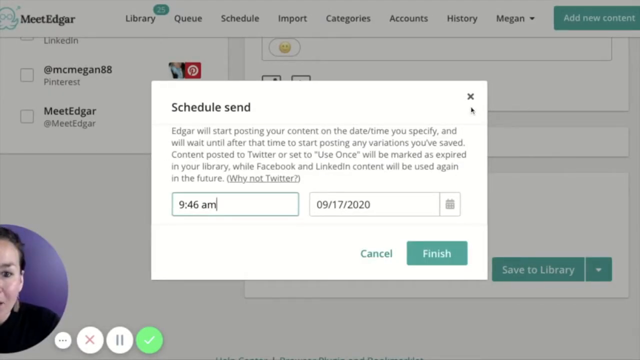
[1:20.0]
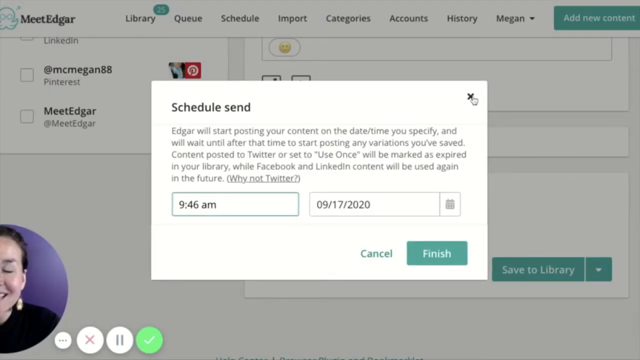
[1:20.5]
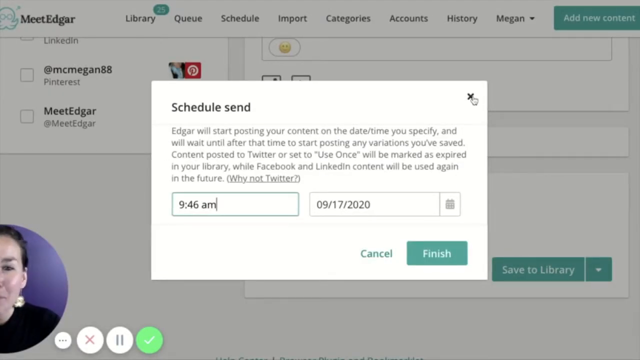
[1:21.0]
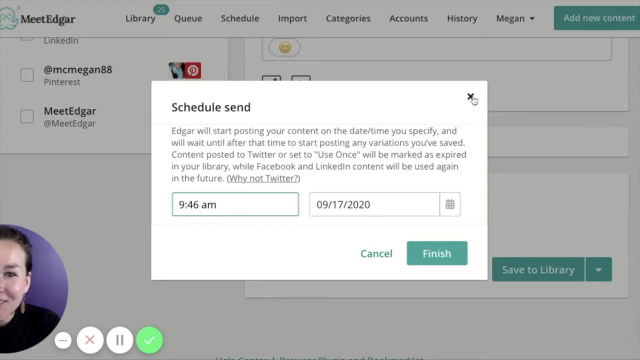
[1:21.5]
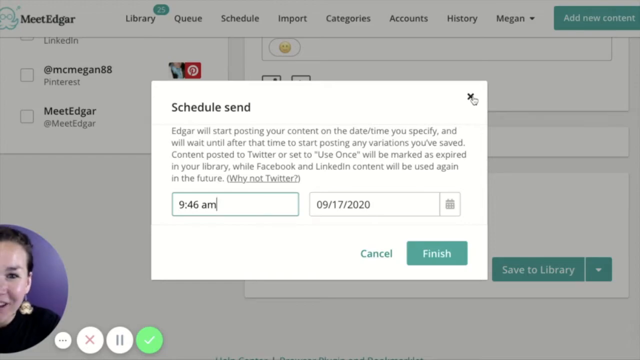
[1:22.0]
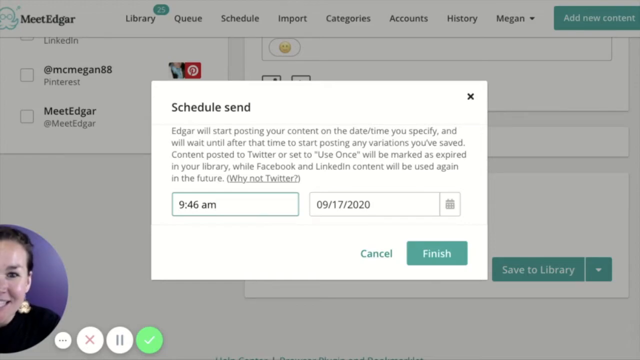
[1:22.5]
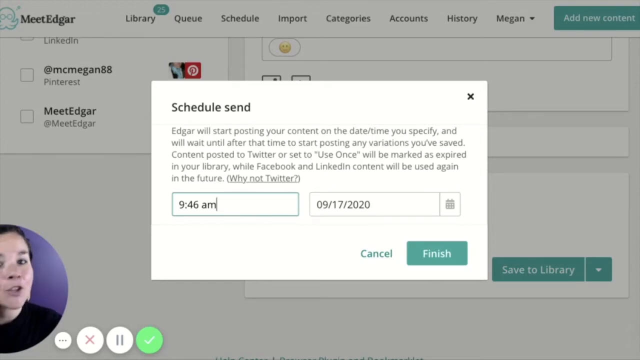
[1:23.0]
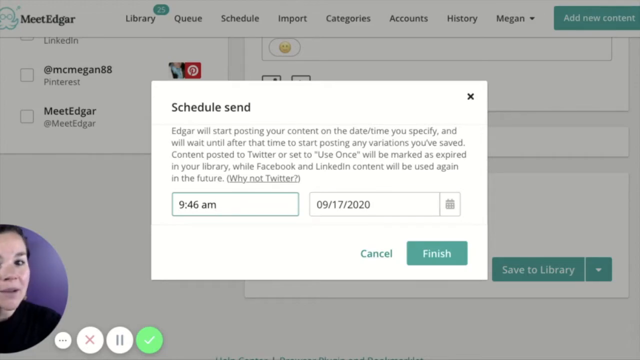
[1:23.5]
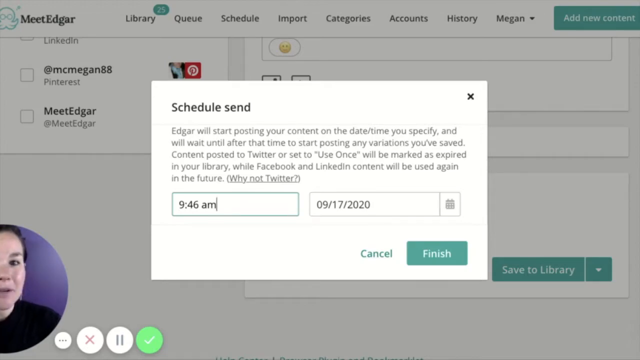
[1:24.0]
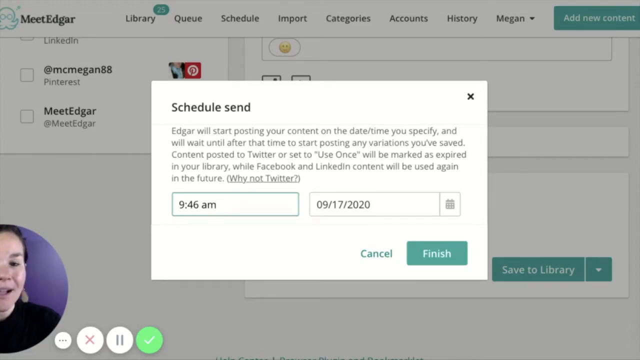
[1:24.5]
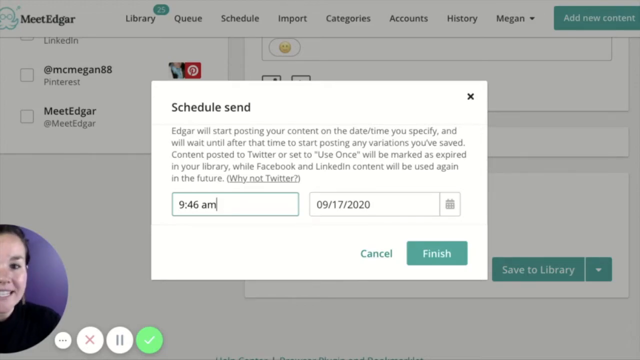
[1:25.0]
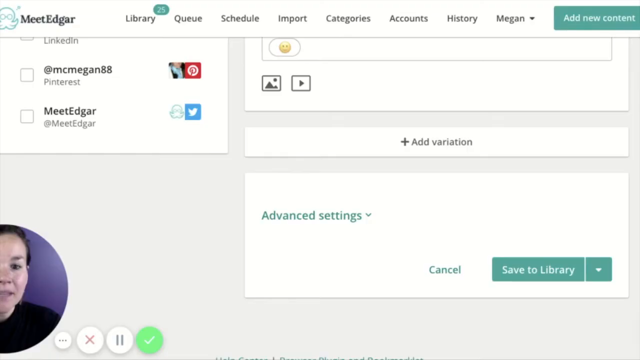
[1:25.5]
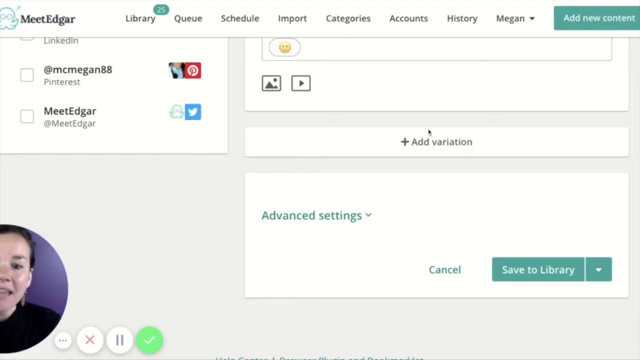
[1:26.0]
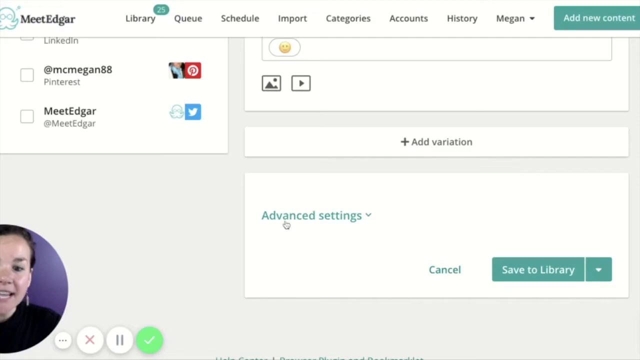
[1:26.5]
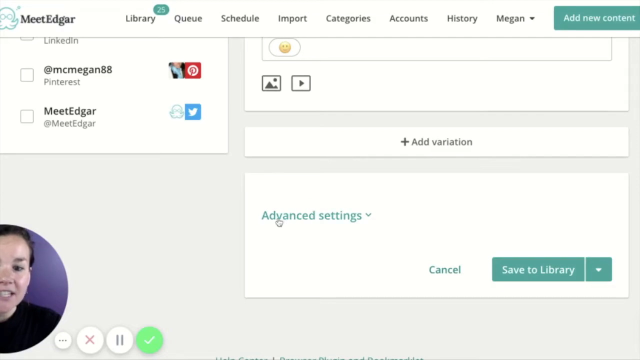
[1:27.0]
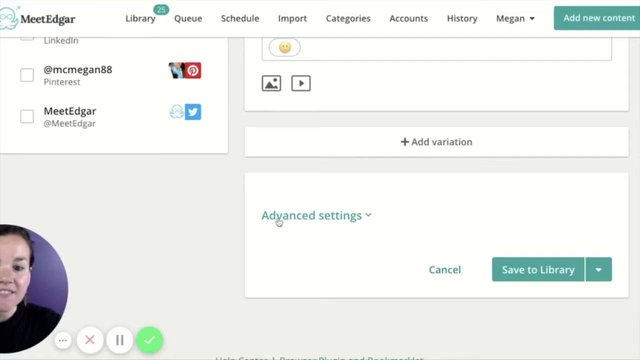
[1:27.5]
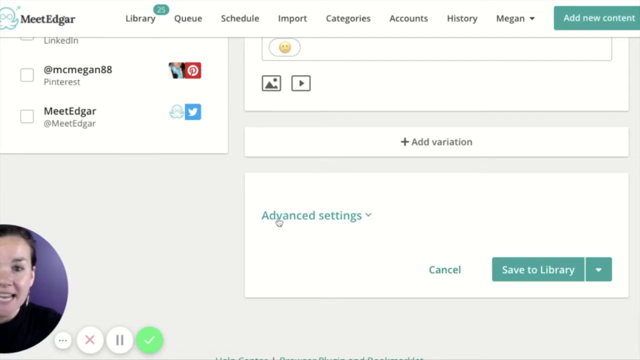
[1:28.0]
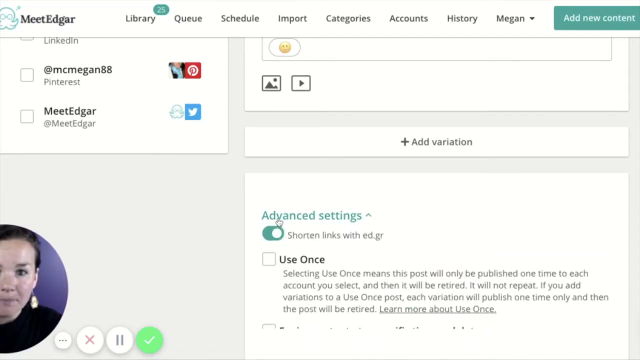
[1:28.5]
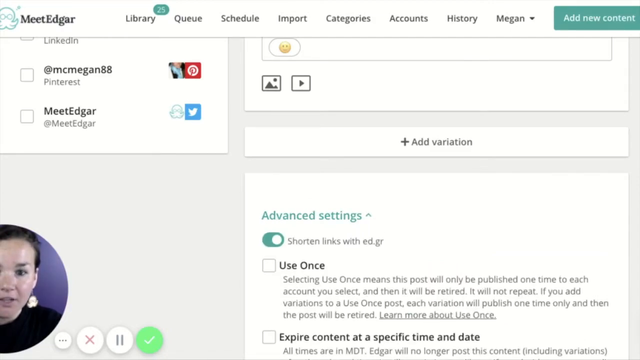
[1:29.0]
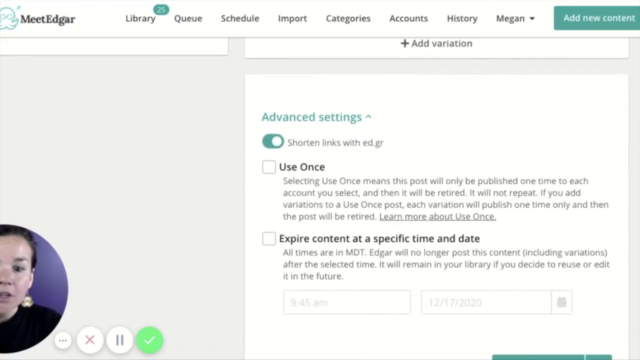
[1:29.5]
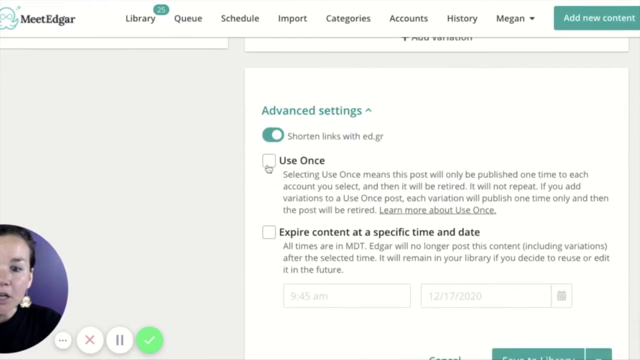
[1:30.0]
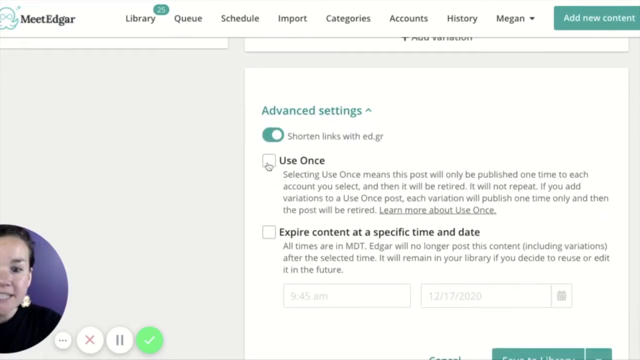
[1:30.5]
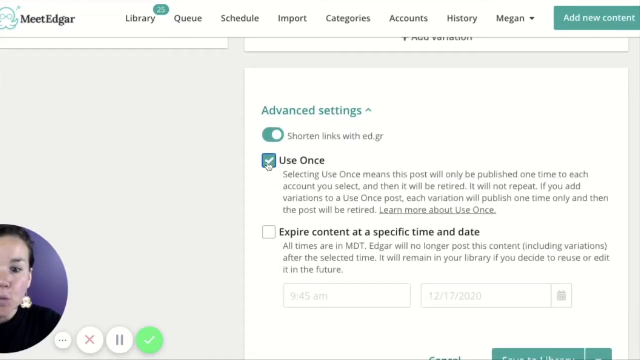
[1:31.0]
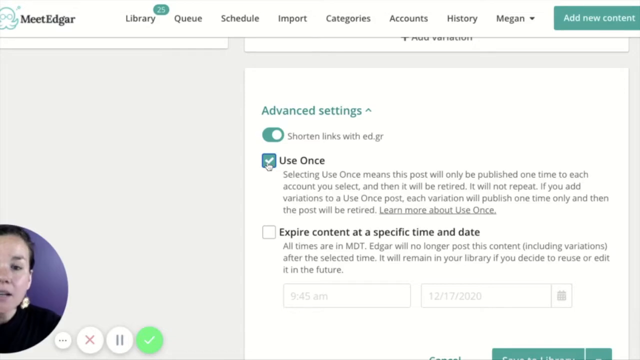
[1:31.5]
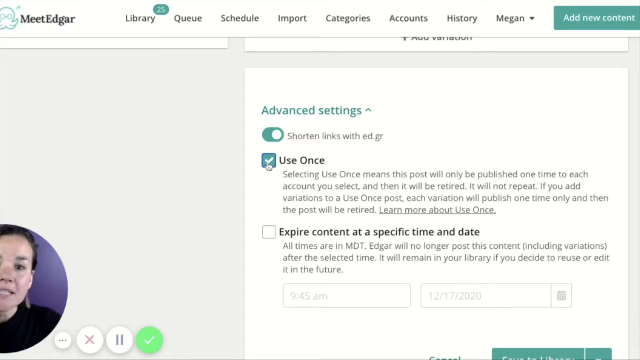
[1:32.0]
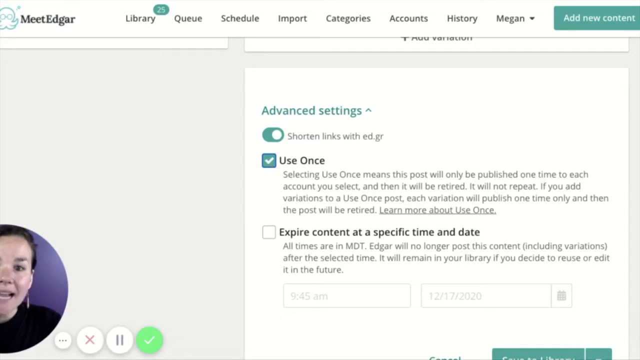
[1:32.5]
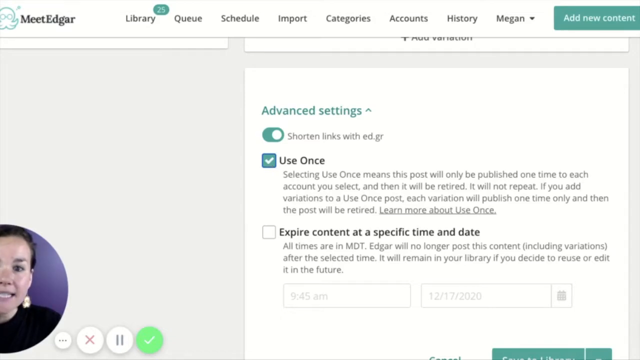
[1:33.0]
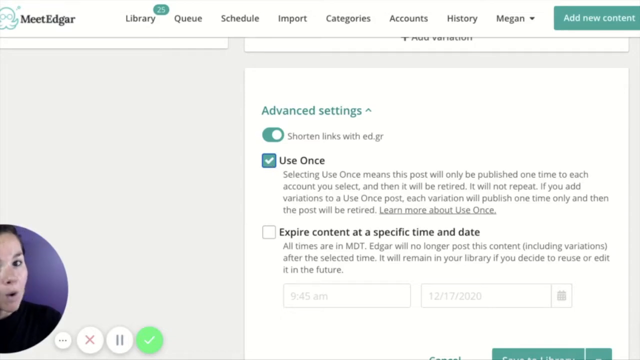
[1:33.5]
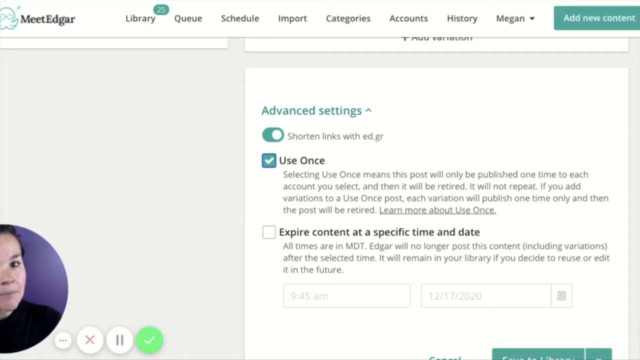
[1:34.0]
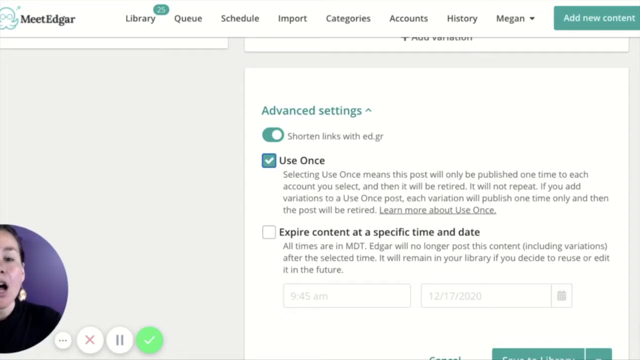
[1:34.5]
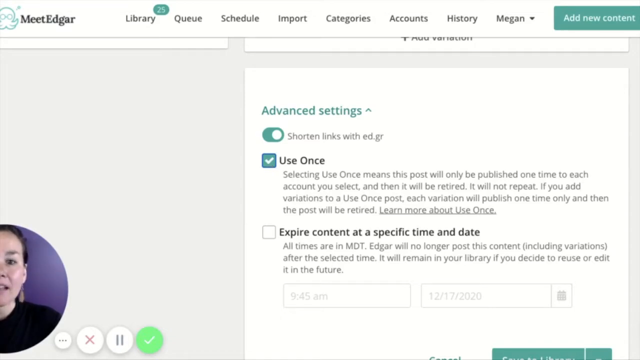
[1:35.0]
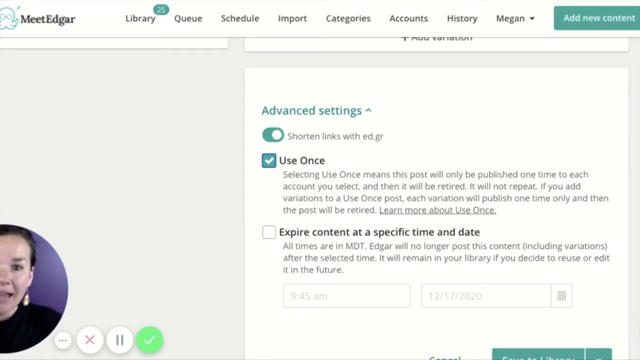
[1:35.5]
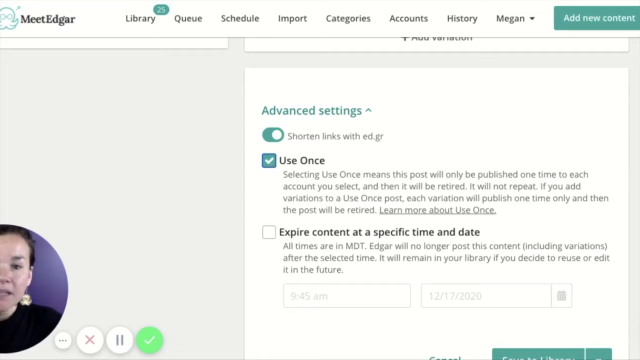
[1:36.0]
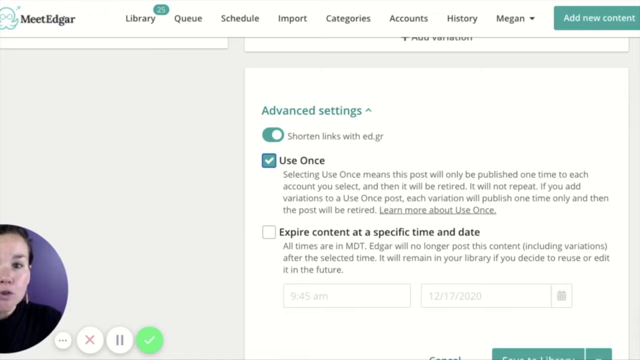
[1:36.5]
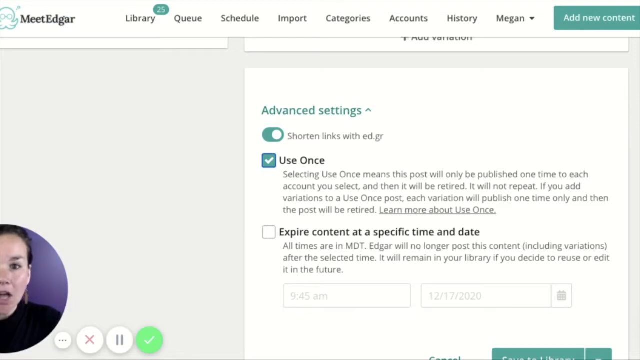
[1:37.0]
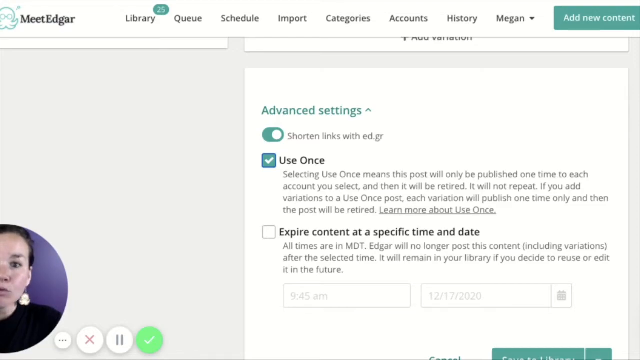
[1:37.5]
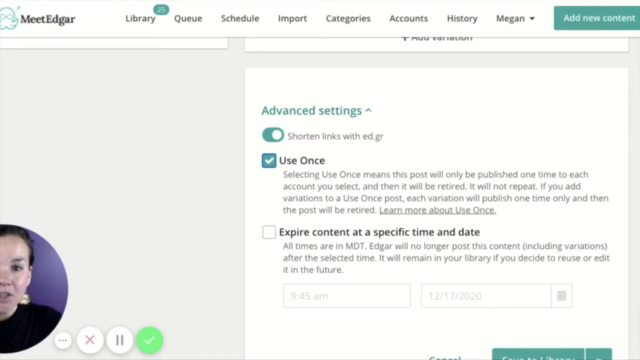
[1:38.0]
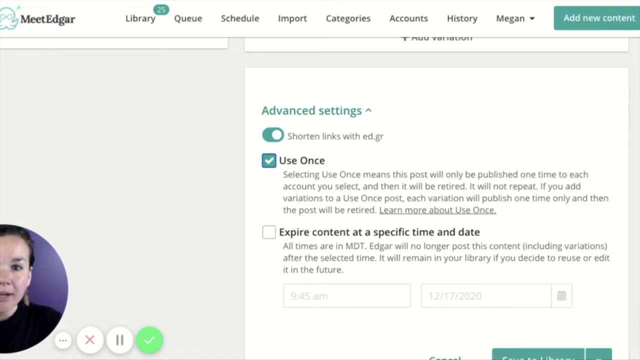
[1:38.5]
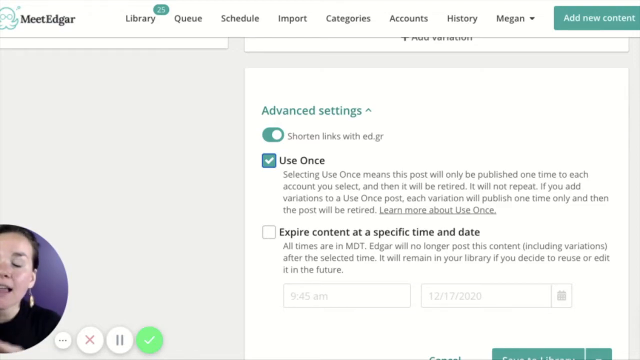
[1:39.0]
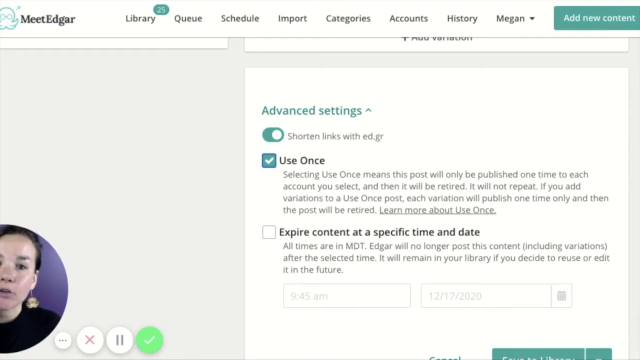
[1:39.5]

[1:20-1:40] She continues going through the post scheduling process. In the Schedule Send section with the time and date, she changes nothing and closes it. She then clicks the Advanced Settings section, which opens a drop-down with a "Use Once" checkbox and another checkbox reading "Expire Content at a Specific Time and Date." After dealing with the "Use Once" option and leaving the other checkbox untouched, she moves back to the "Schedule and Send" page. In the top right corner of the screen, white text on a green background reads "Add new content."